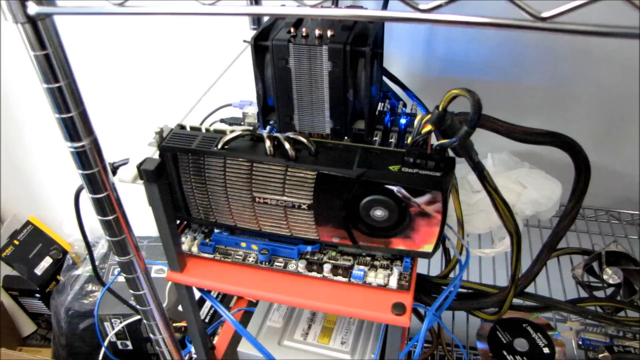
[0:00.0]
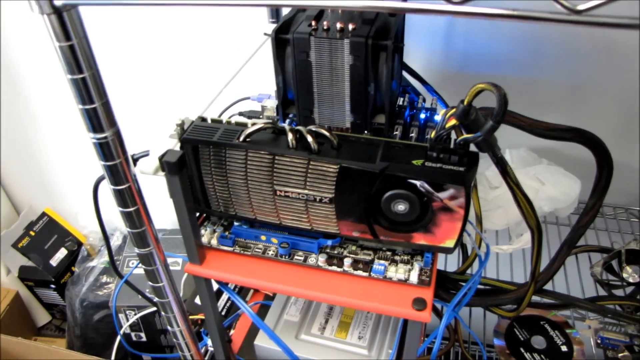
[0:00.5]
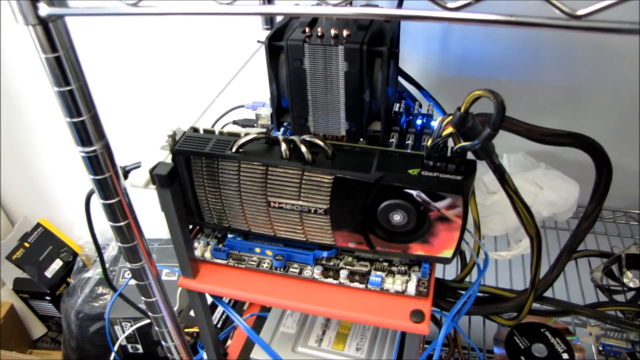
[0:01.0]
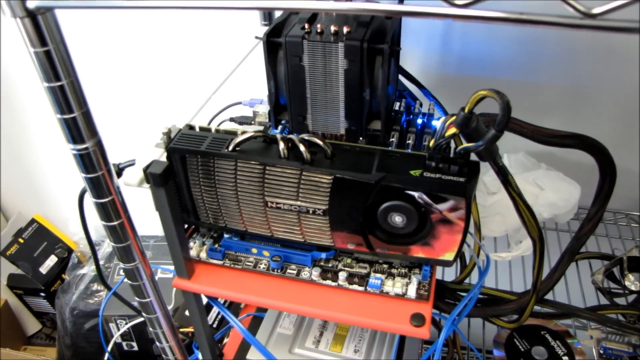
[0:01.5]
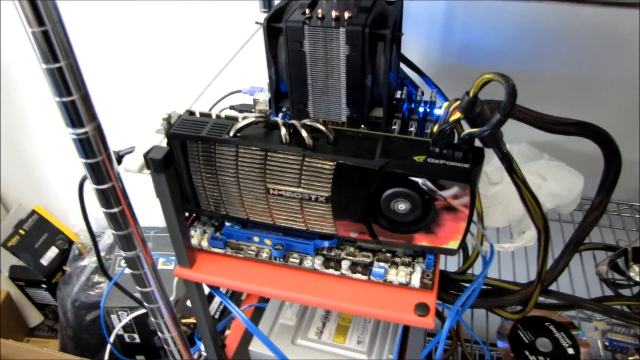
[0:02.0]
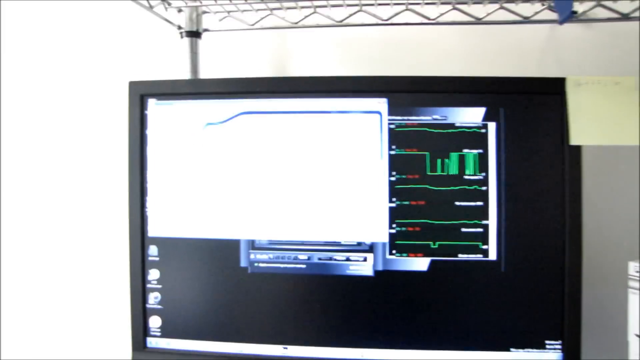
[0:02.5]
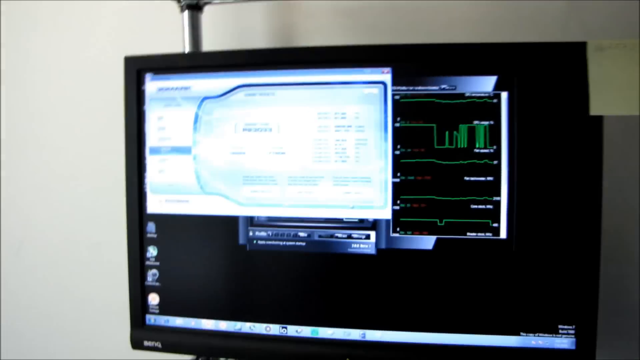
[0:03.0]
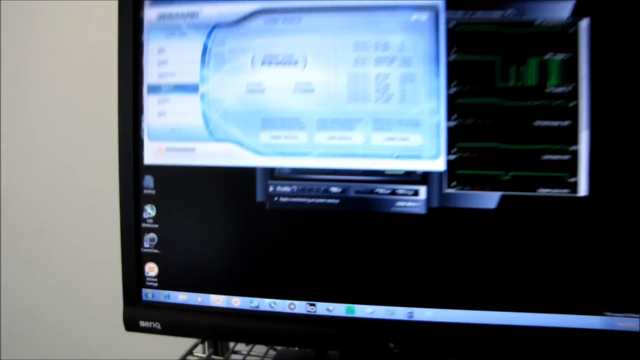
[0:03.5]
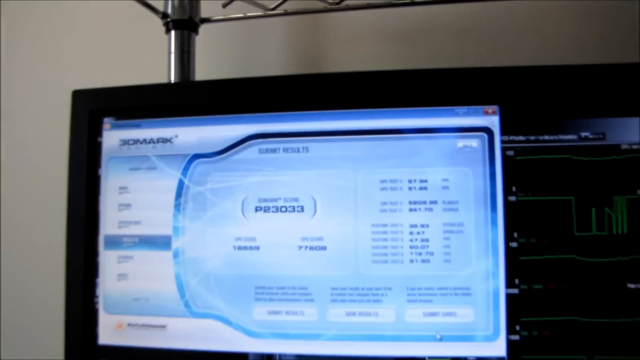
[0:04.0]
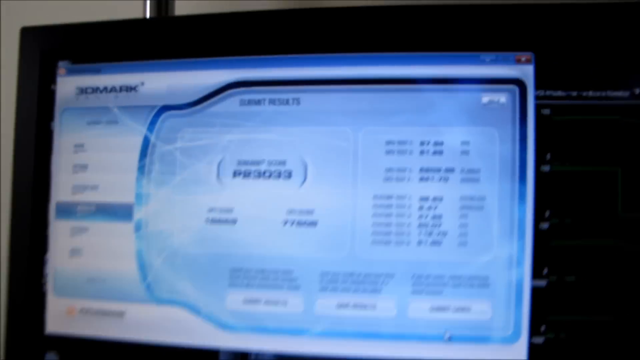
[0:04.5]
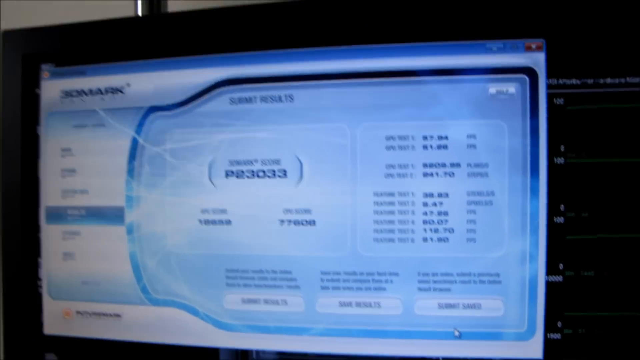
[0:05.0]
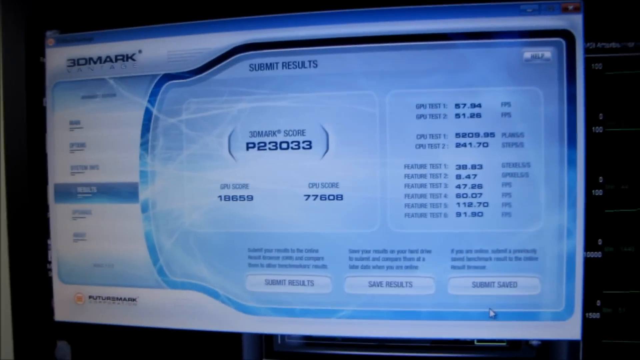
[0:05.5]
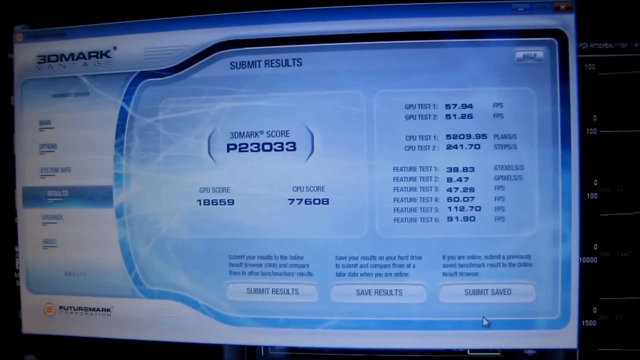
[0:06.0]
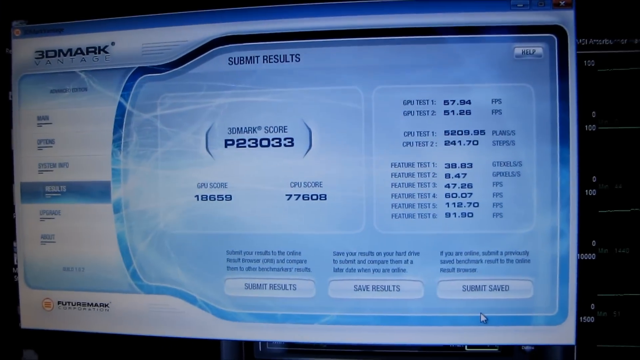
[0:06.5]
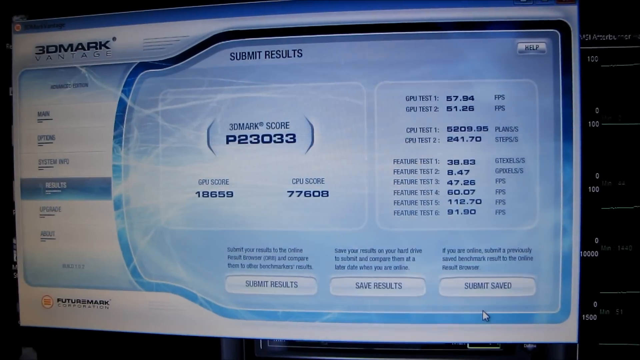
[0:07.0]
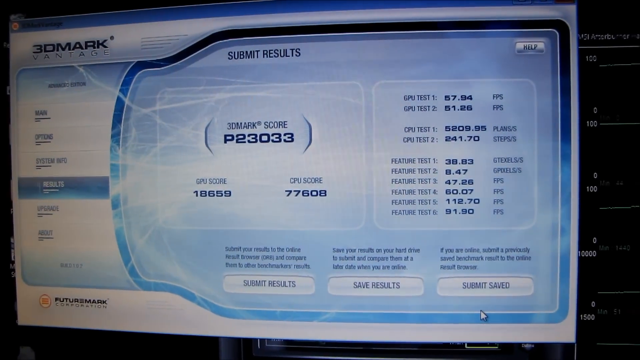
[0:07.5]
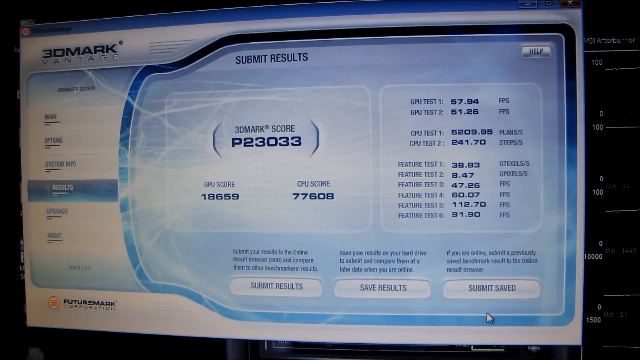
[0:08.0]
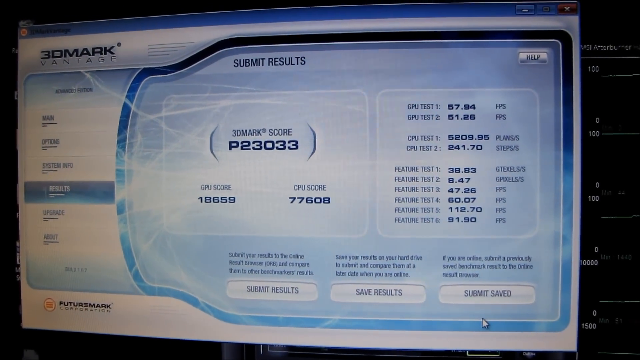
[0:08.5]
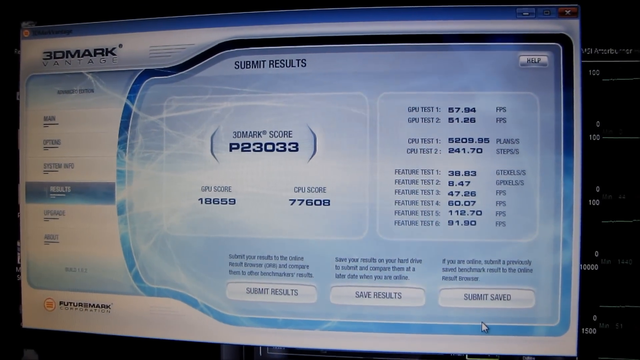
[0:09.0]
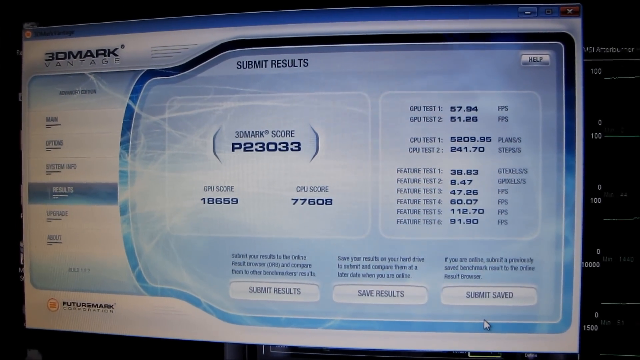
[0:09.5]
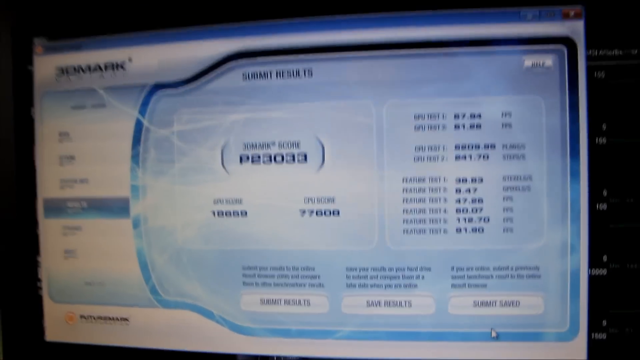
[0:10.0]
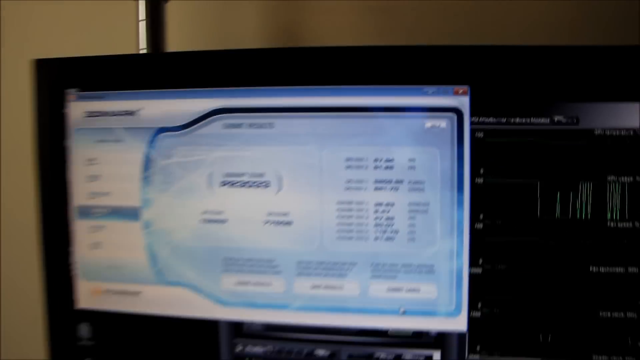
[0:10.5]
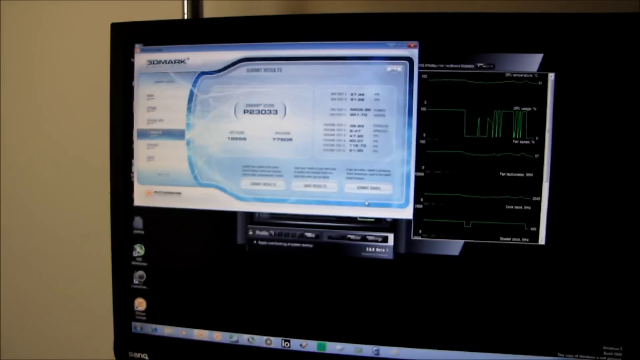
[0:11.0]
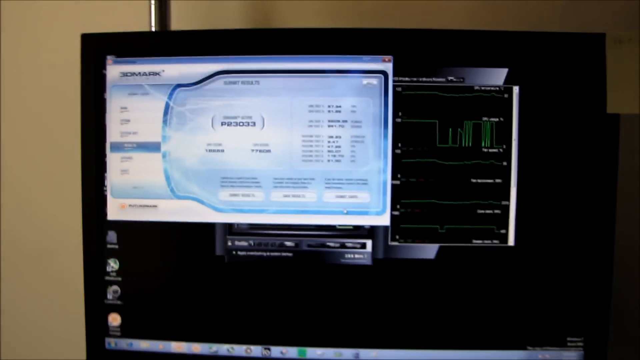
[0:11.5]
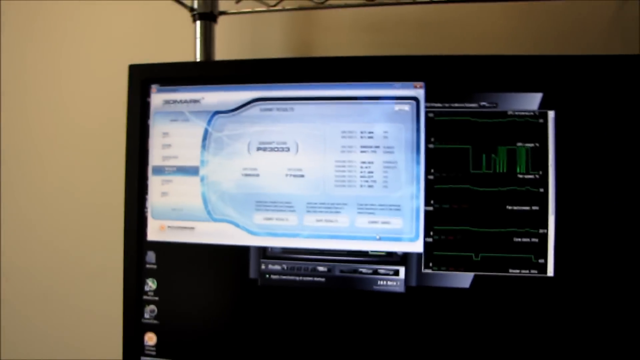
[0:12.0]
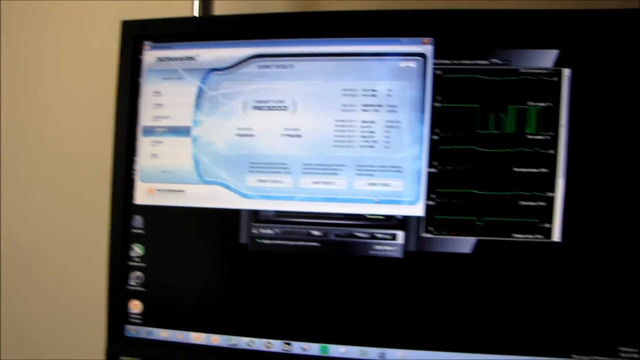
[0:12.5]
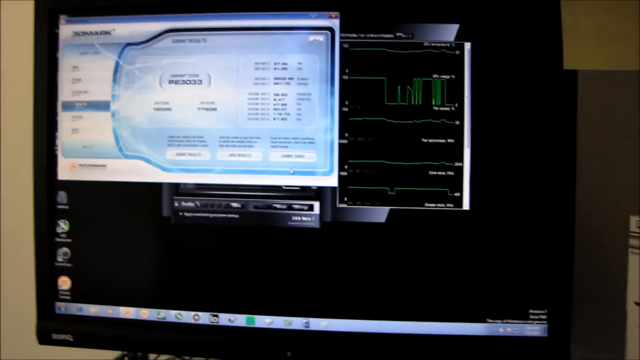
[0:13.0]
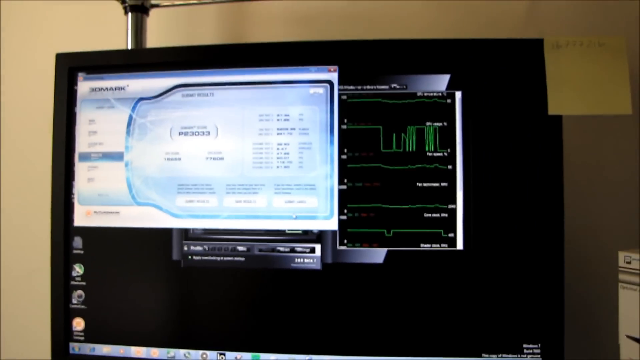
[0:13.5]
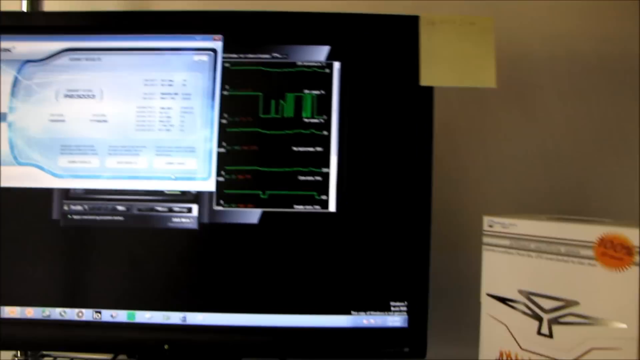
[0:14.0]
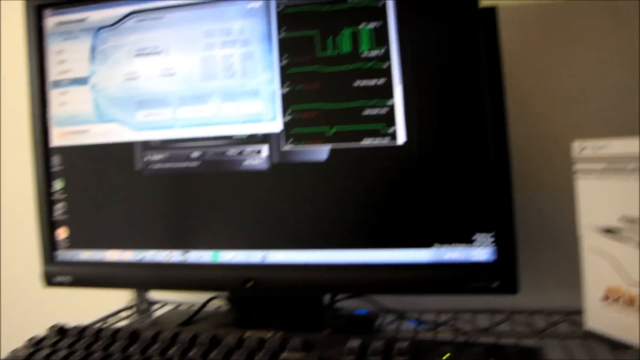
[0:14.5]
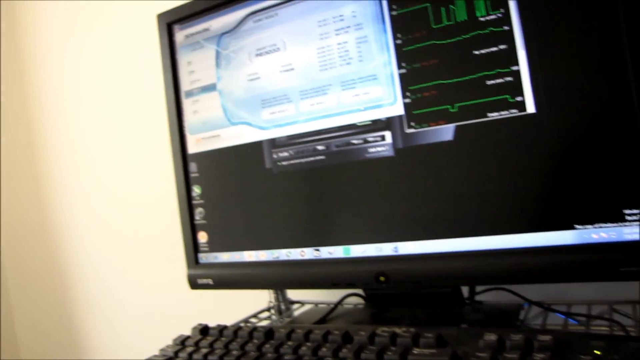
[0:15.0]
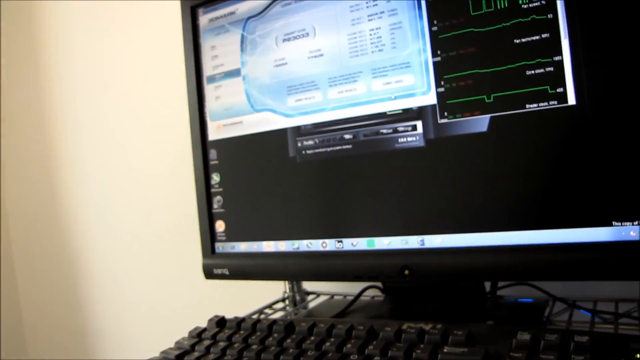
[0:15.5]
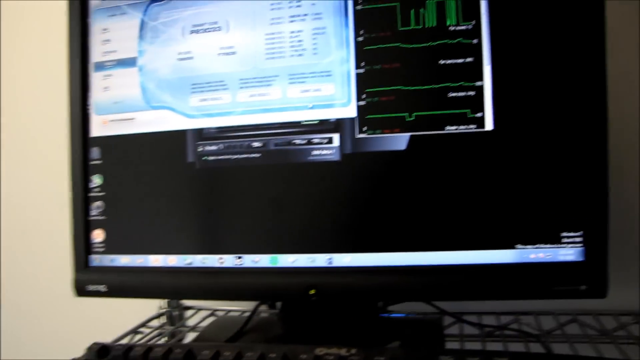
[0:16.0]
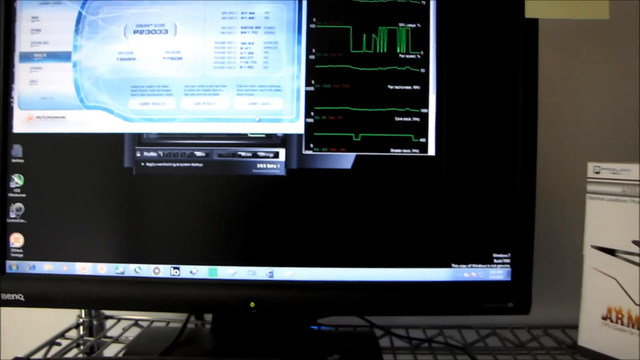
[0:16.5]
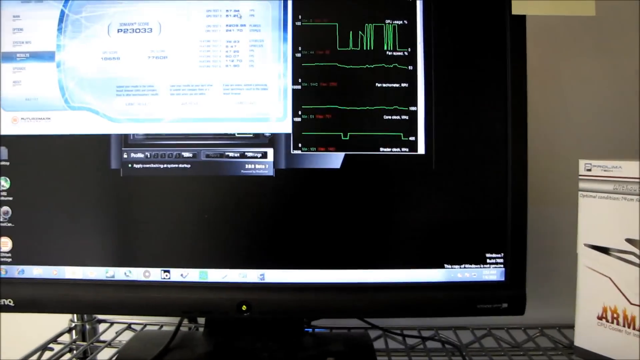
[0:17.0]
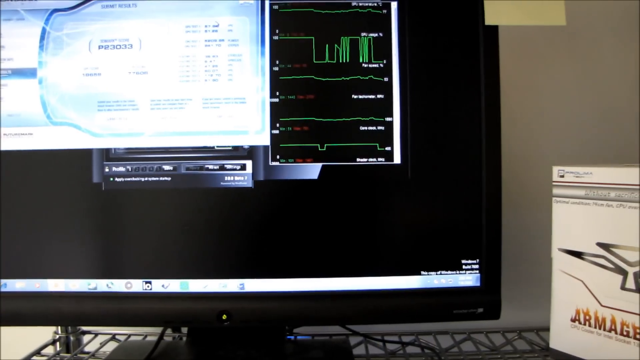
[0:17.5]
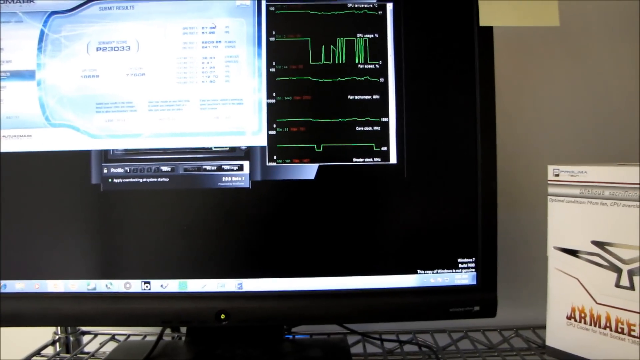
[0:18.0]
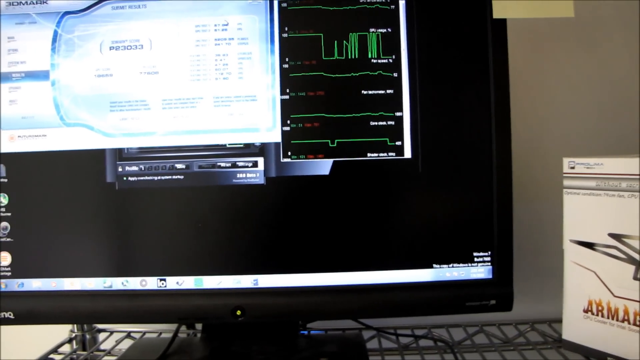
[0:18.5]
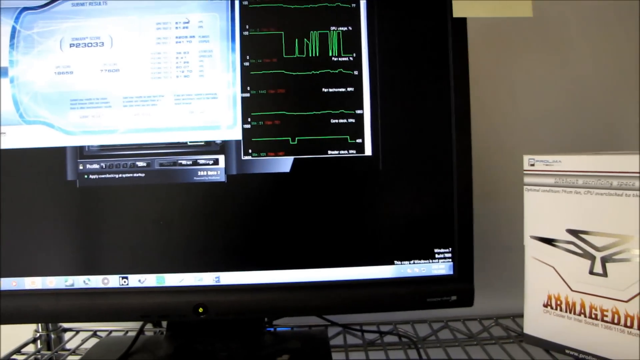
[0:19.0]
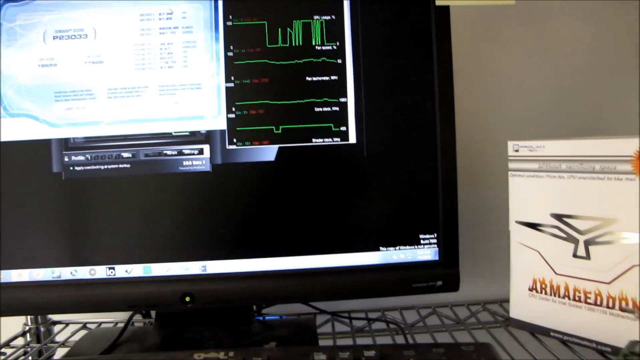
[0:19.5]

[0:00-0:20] A device hooked up underneath a computer is shown briefly; the computer is on a sort of metal stand with the device beneath it. The camera then goes up to the computer monitor and zooms in on the upper left-hand corner of the screen, where the small print is hard to read but appears to mention some sort of score along with a bunch of numbers, apparently related to the machine shown at the start. The camera zooms out from the computer and pans to the right, and someone's hand comes into the shot at the lower right side of the screen before the shot cuts off.